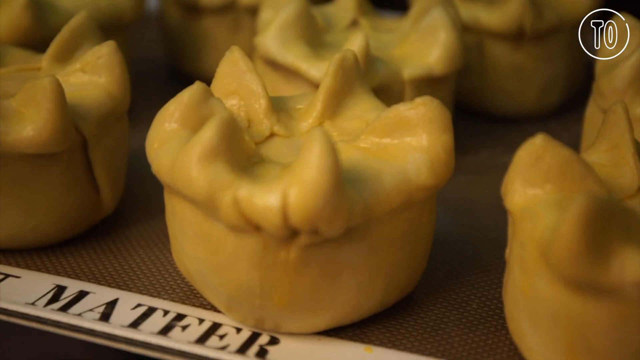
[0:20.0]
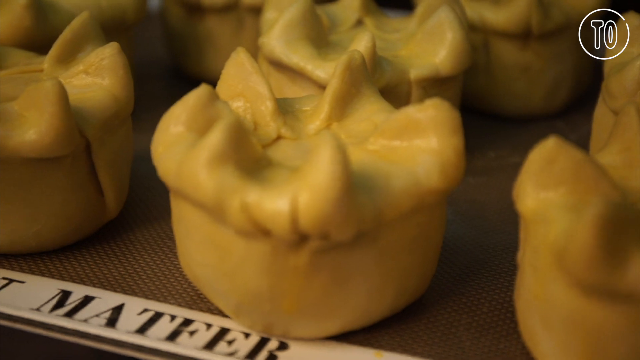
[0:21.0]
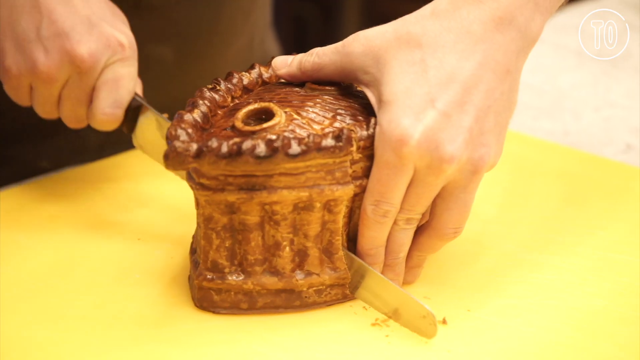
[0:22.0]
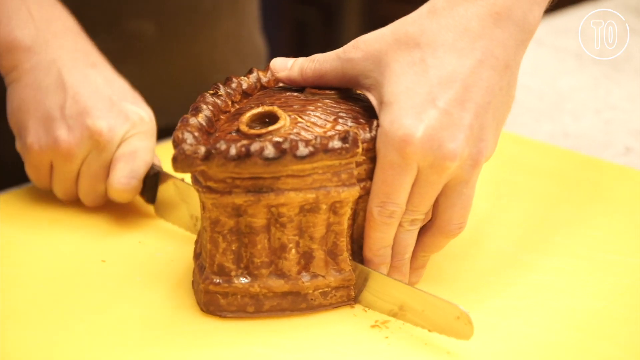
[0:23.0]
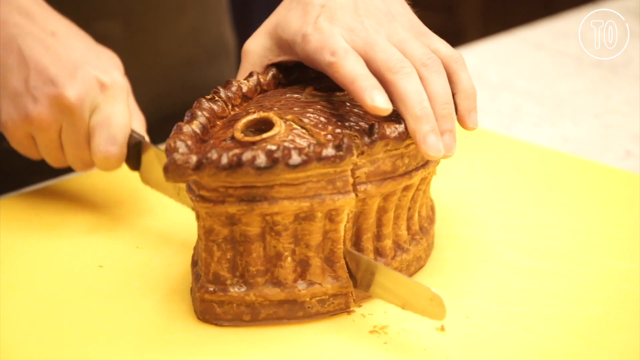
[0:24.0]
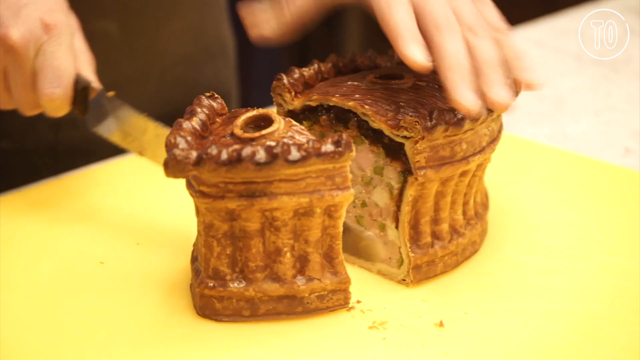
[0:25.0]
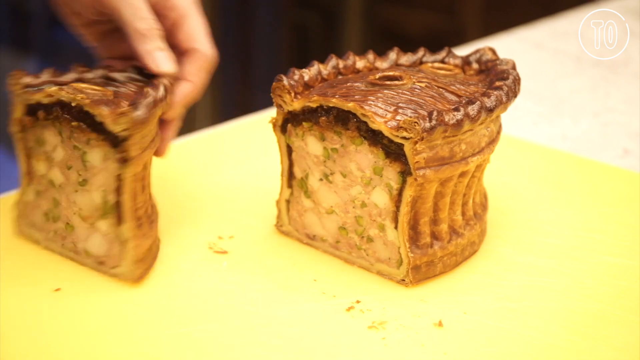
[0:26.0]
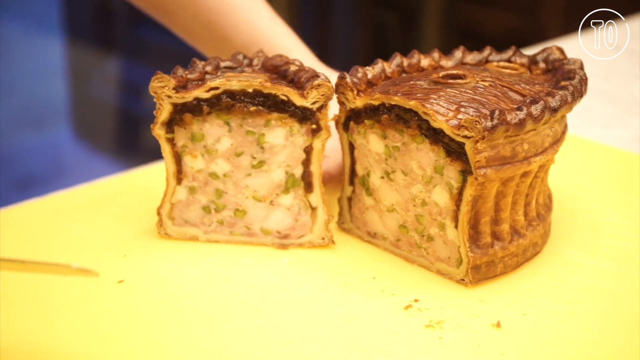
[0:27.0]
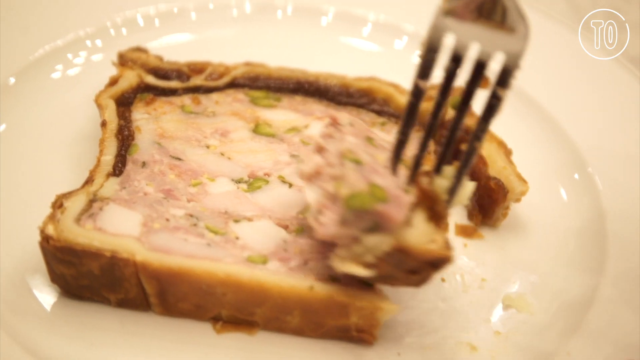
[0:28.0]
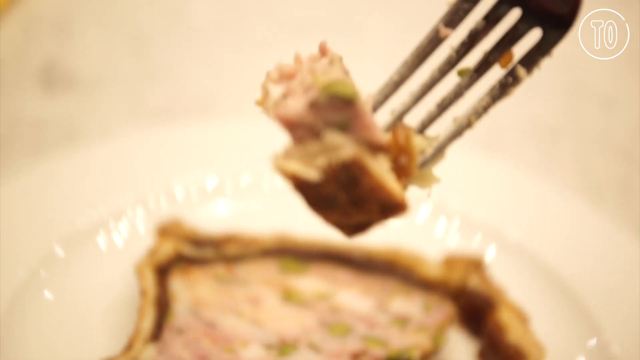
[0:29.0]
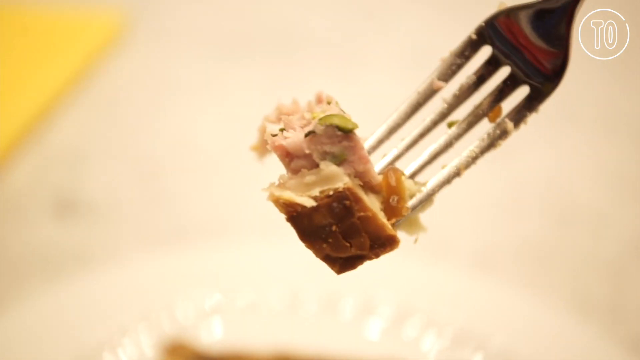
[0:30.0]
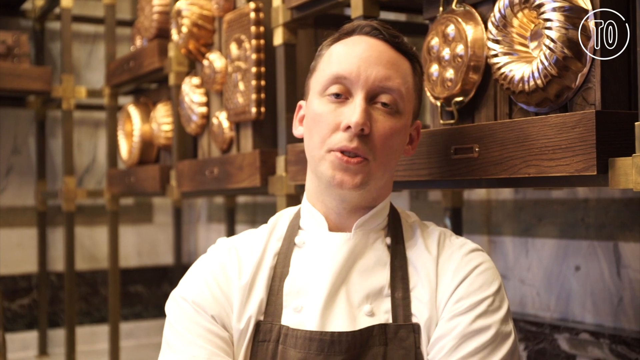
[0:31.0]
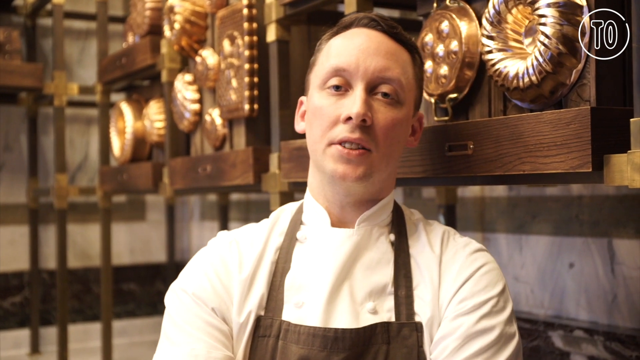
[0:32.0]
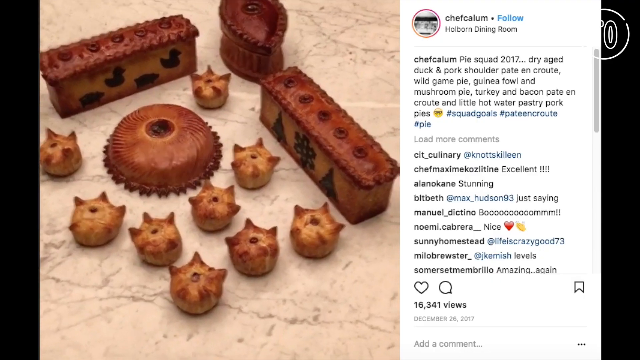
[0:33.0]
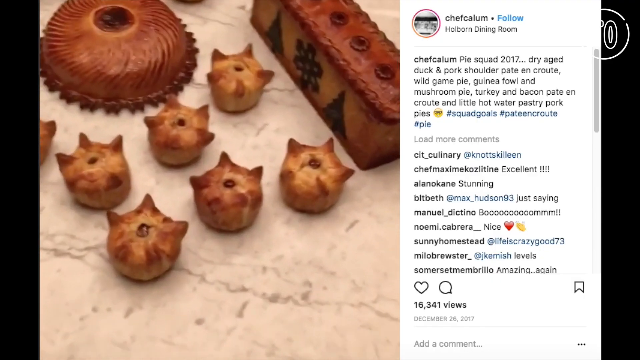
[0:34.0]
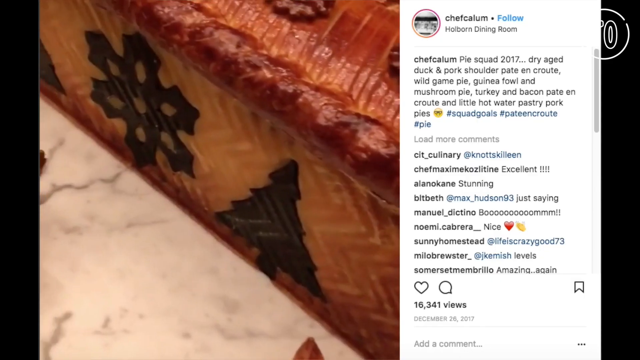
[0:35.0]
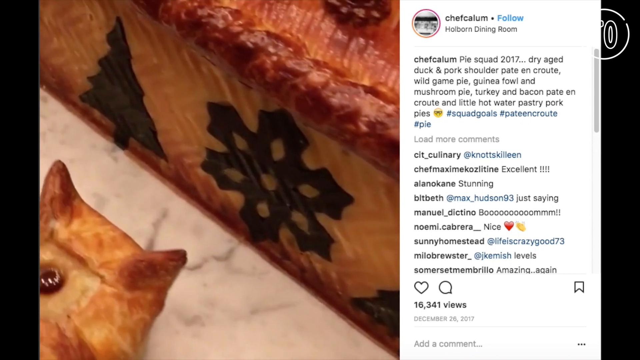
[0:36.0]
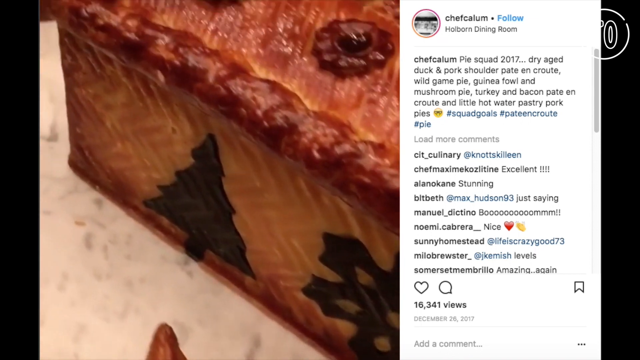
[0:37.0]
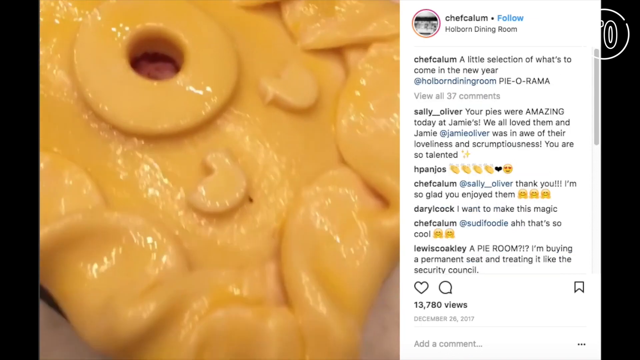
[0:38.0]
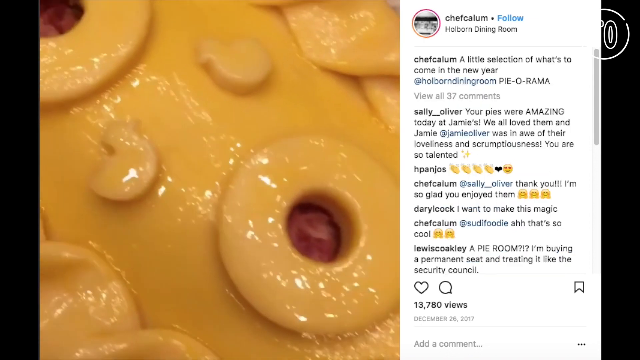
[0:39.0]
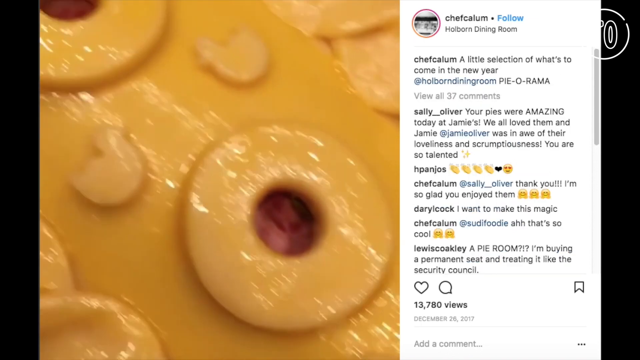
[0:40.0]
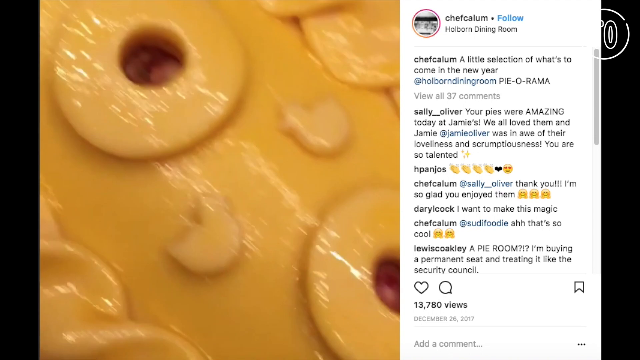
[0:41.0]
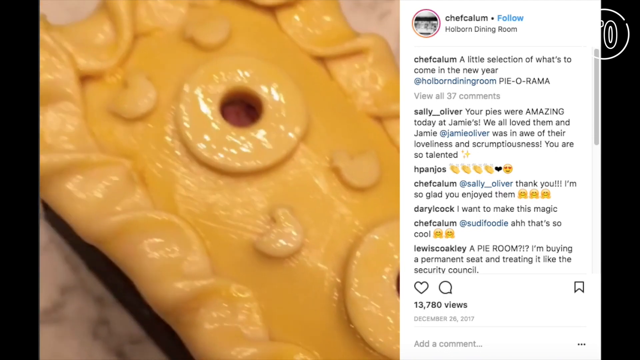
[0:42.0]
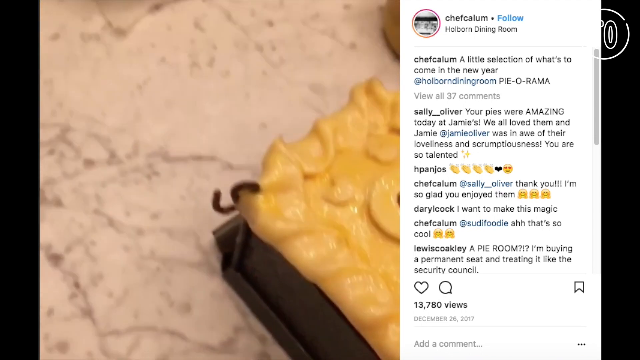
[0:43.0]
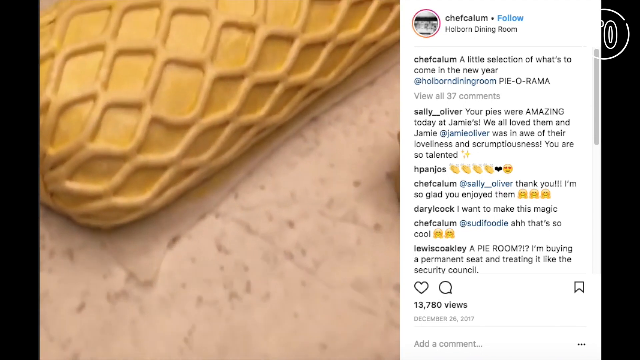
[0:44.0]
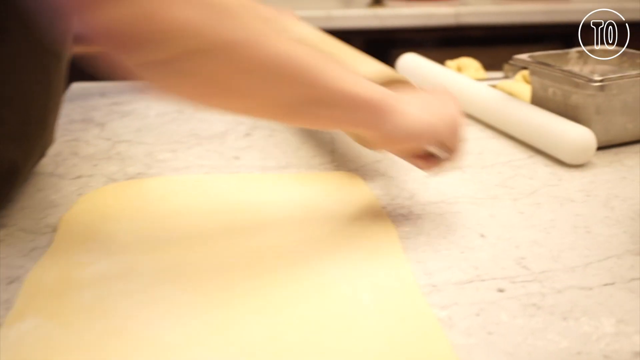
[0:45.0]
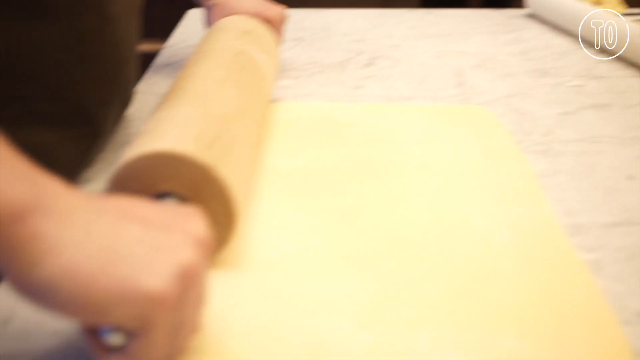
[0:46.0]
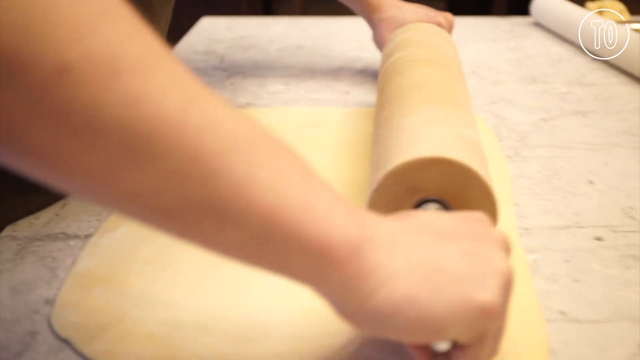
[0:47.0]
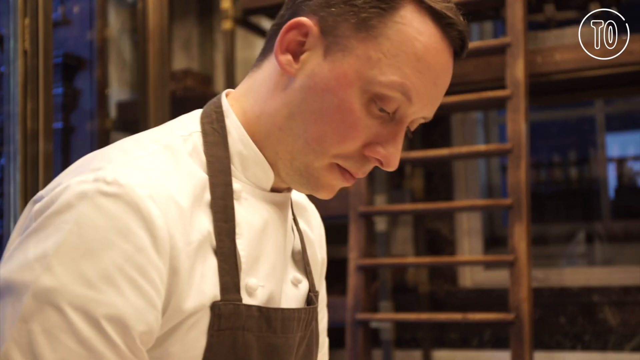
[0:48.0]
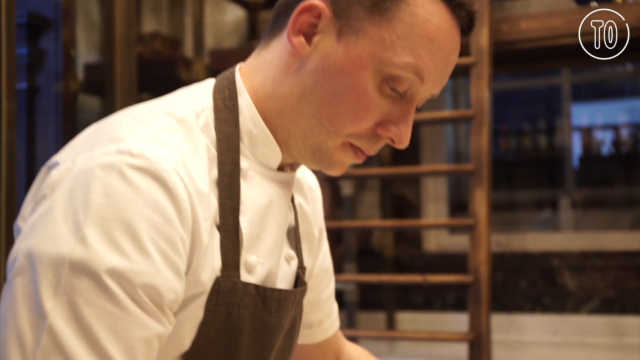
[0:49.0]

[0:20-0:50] A close-up shows some pastries with a sort of round body; their tops are shaped like little tents surrounding the edges, with a flat center. The camera focuses on them and begins to pan very slowly to the left. In the next scene, a pair of hands appears: the right hand holds a knife and the left hand holds one of the pies, with the blade almost fully through the pie. The right hand holds the pie firmly as the blade continues to saw through. At the bottom the blade meets a bit of resistance, so the person wiggles it, and it finally breaks through, slicing fully through the pie. The person then drags the back portion of the pie away with the left hand, braces the knife against the smaller piece on the left side and moves it away as well, turning both pieces so their insides face the camera.